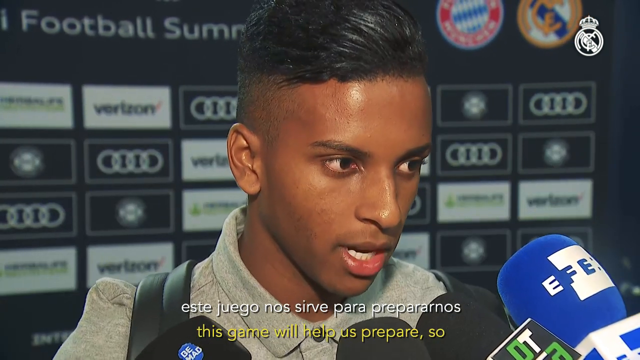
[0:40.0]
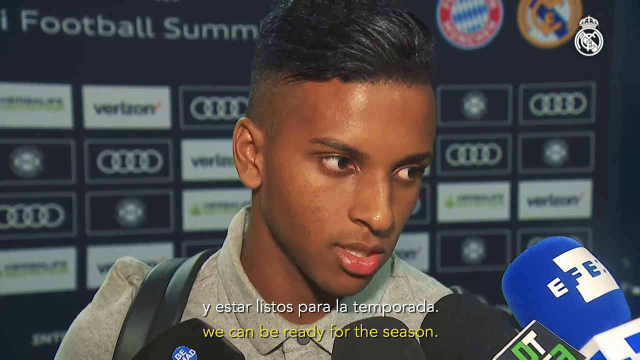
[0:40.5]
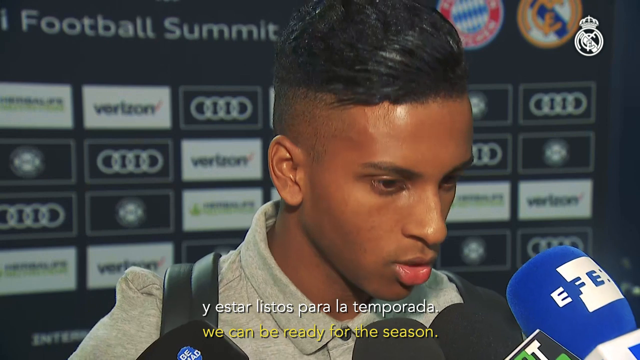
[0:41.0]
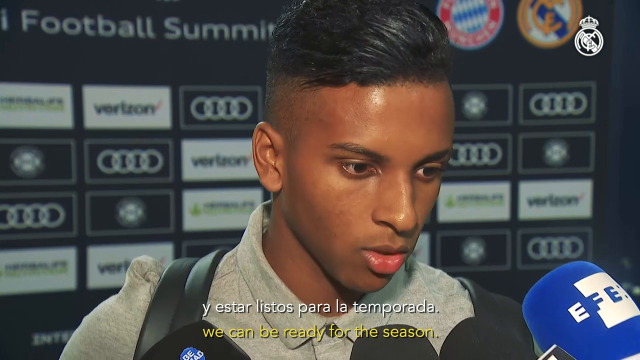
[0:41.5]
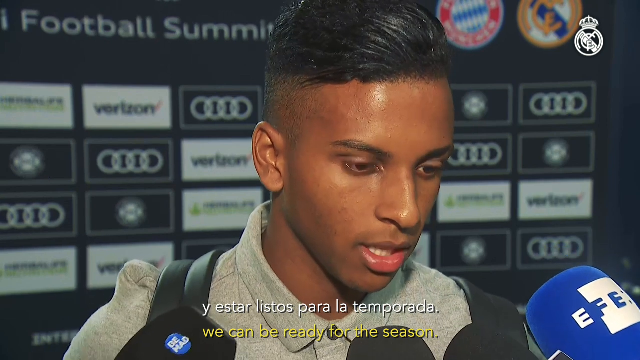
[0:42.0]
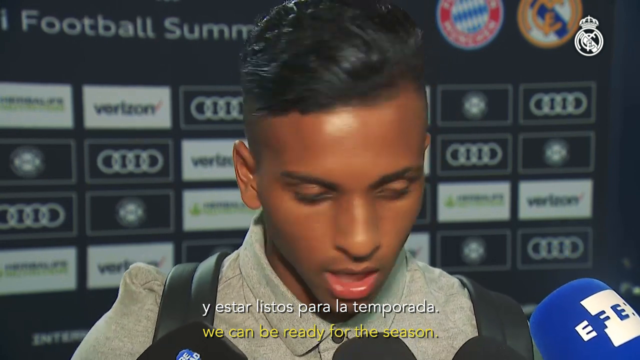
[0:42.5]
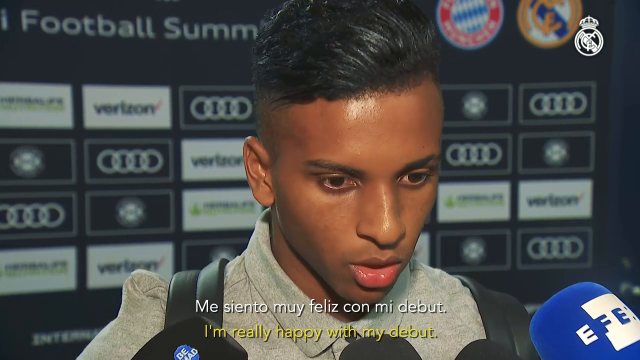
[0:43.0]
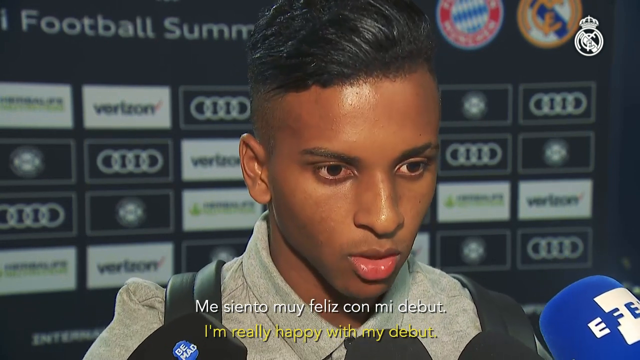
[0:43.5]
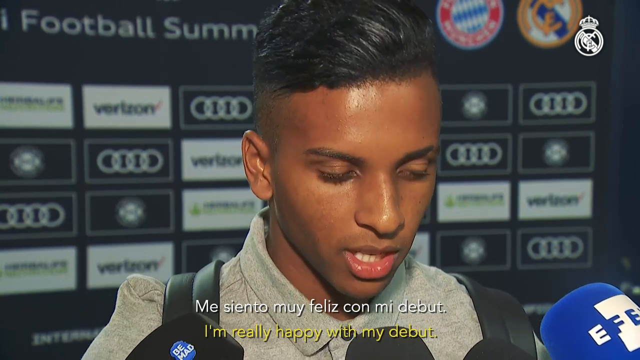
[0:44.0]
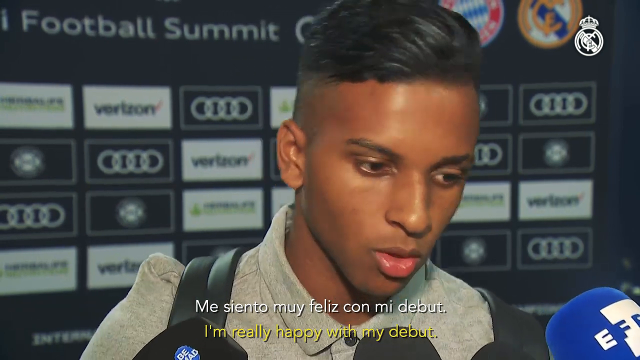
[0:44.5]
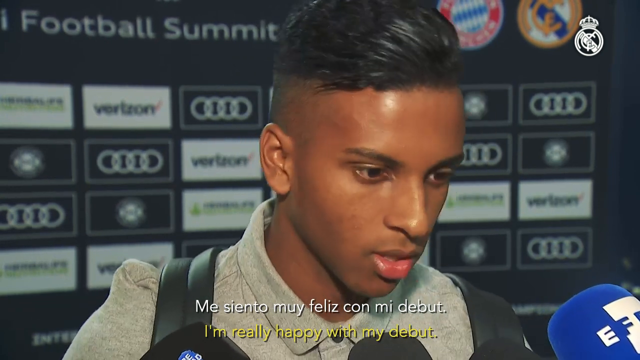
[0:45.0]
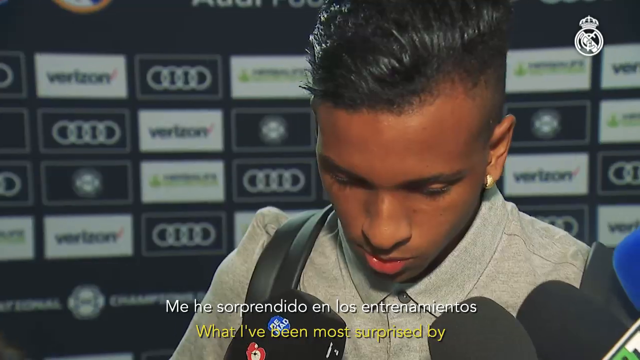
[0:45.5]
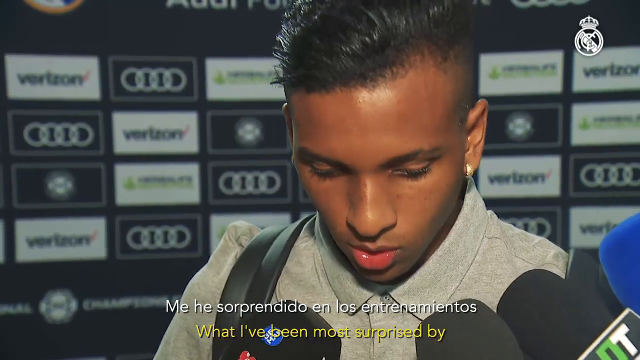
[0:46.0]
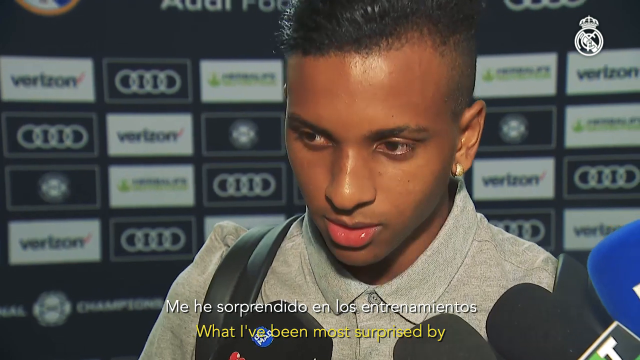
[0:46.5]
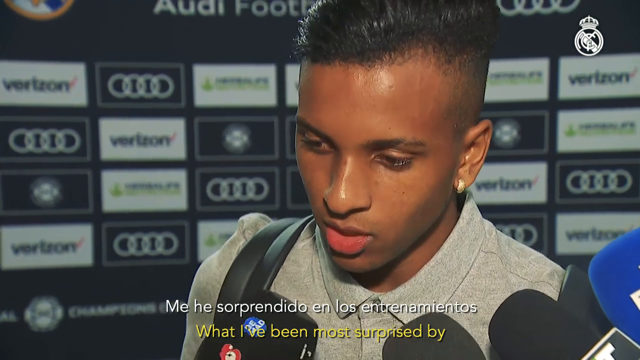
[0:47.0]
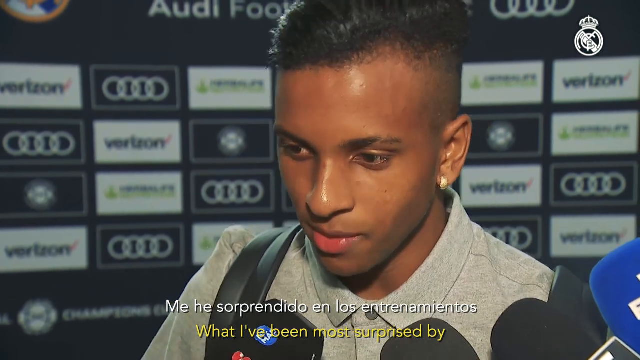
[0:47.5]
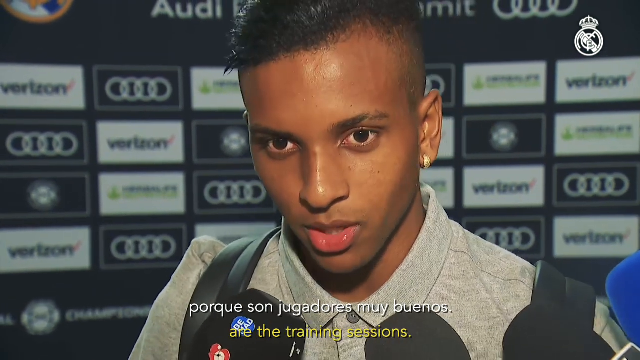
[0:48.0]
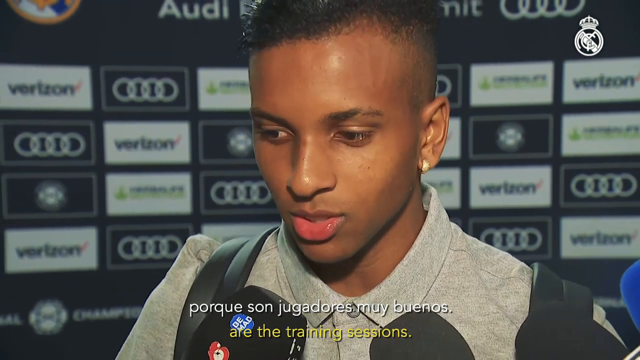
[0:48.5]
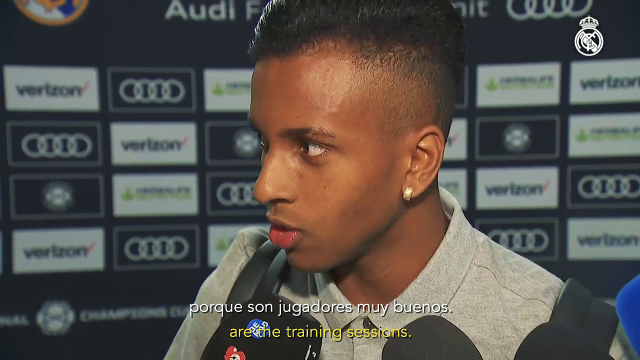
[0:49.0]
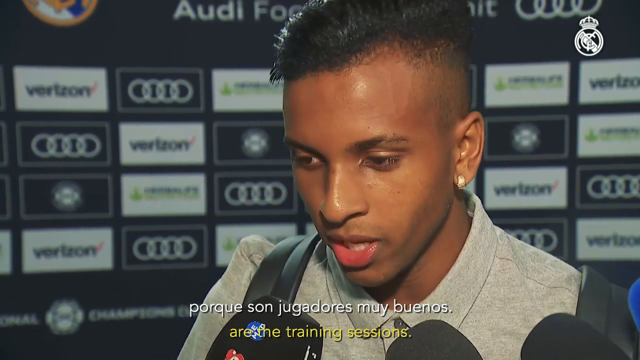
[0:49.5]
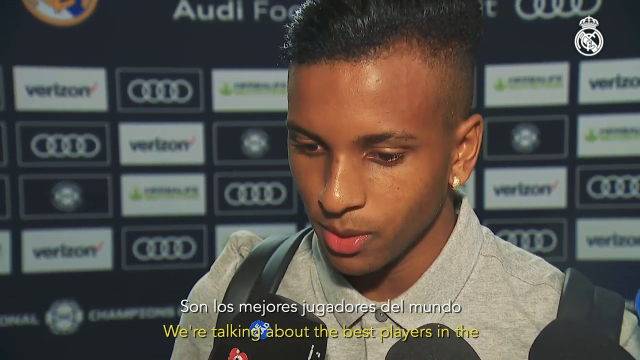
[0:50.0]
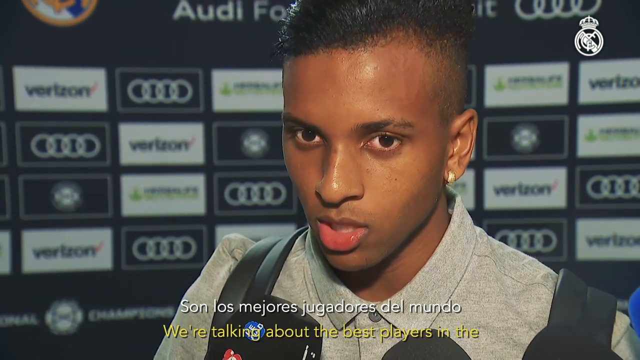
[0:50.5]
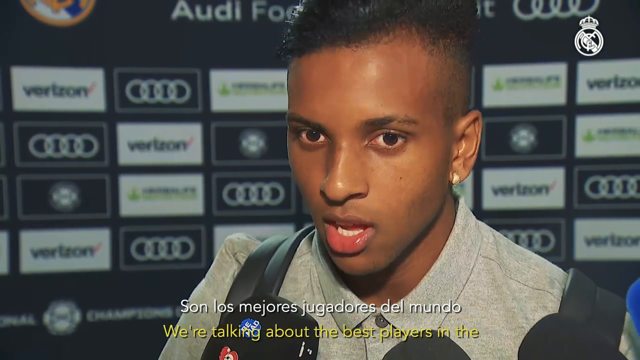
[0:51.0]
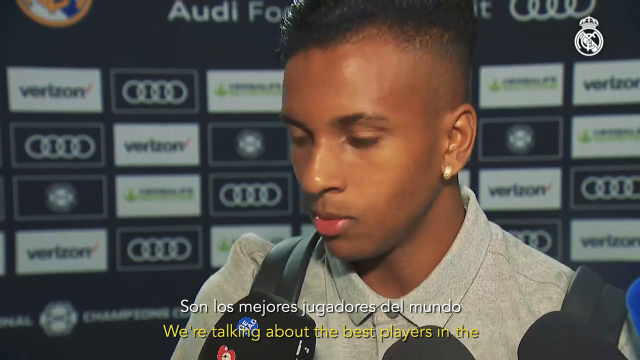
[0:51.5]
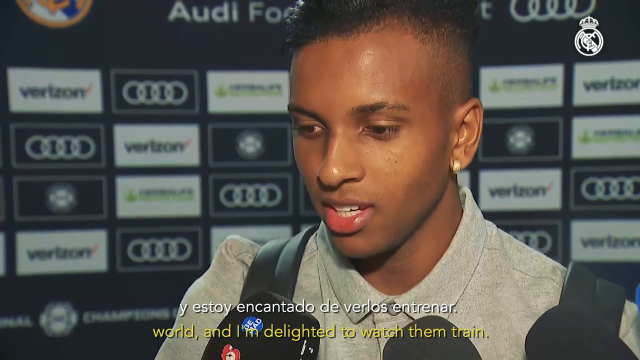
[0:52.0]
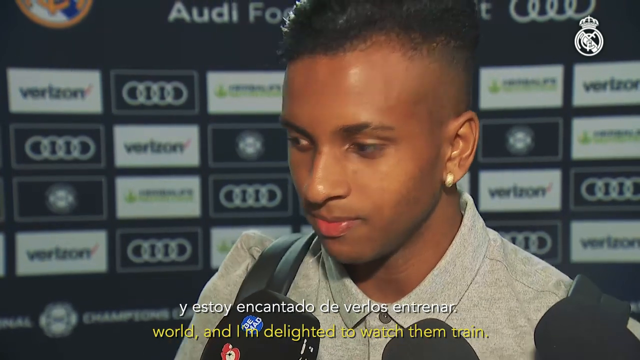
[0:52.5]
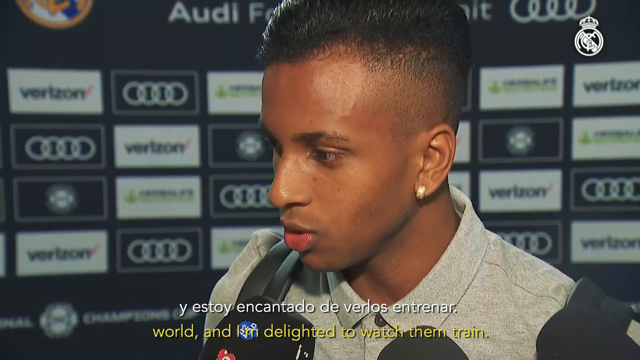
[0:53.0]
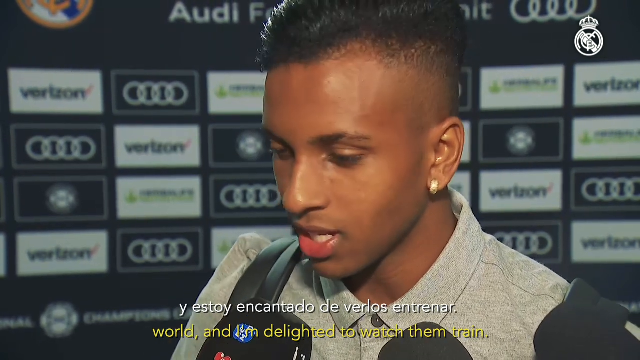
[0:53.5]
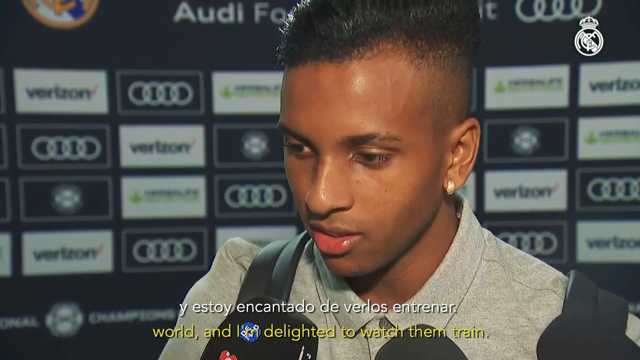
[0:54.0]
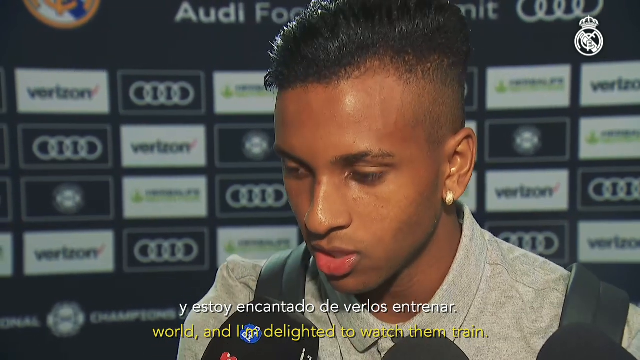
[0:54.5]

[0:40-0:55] The interview continues with the same dark-skinned man. His left ear is pierced with a white-gold-looking hoop. He is seen from about the top of his chest up, talking and sort of shaking and nodding his head on occasion. In the upper right corner of the video is a white illustration of the same crown image shown at the very beginning. The man is likely Rodrygo, and the Asian man interviewed earlier is apparently Kubo, both seemingly Real Madrid players. Beneath the Spanish subtitles there are also yellow English subtitles.